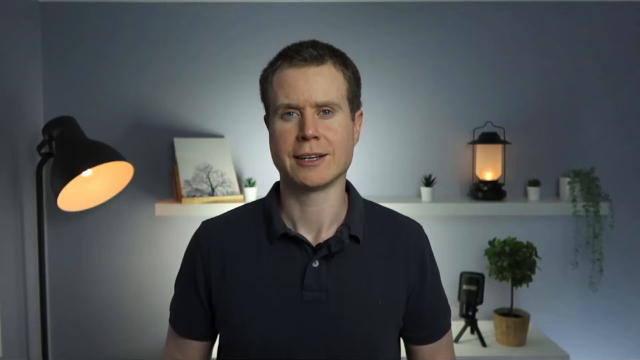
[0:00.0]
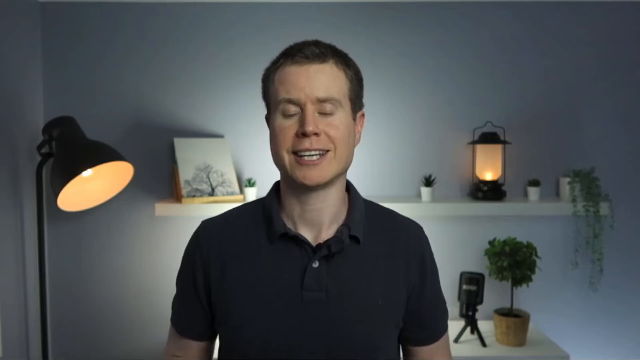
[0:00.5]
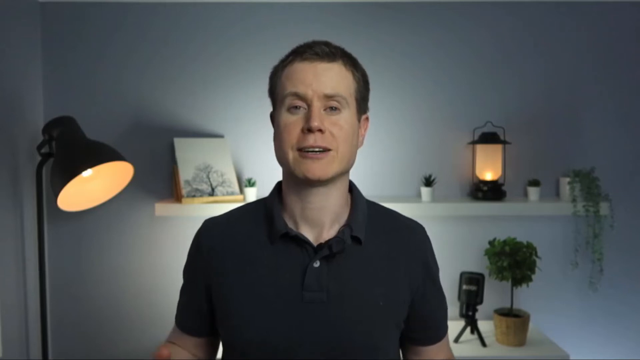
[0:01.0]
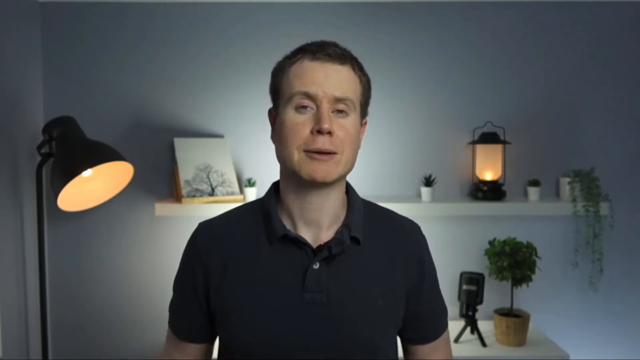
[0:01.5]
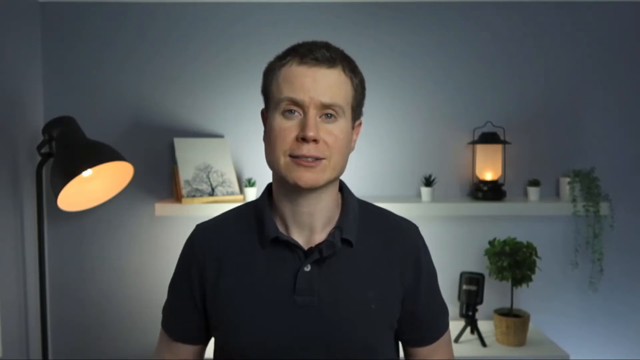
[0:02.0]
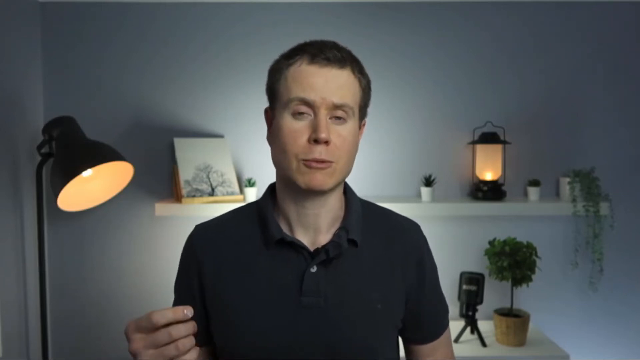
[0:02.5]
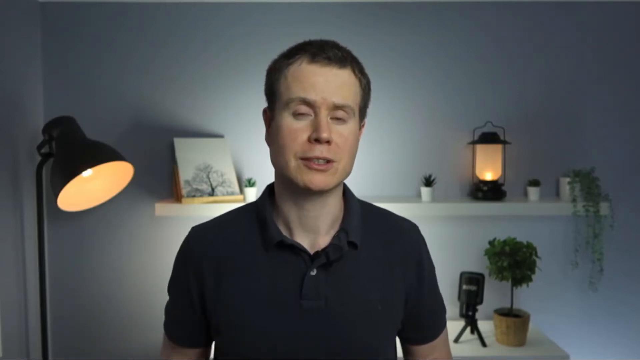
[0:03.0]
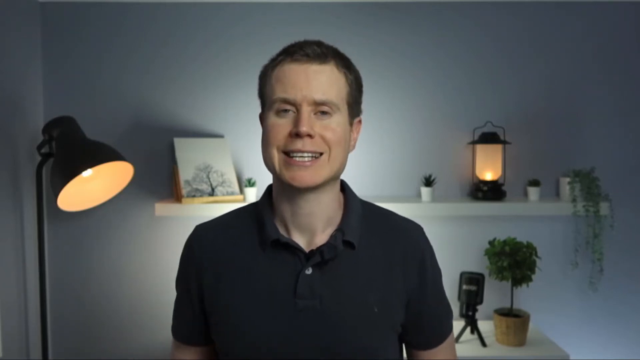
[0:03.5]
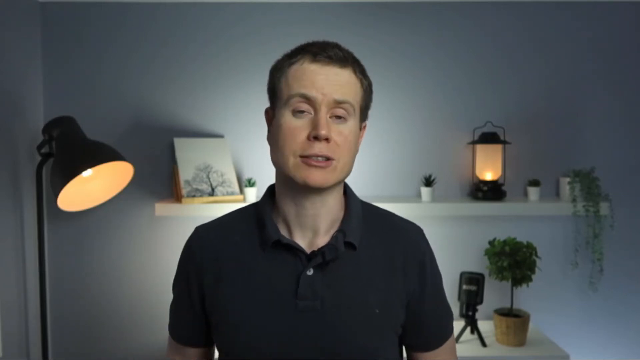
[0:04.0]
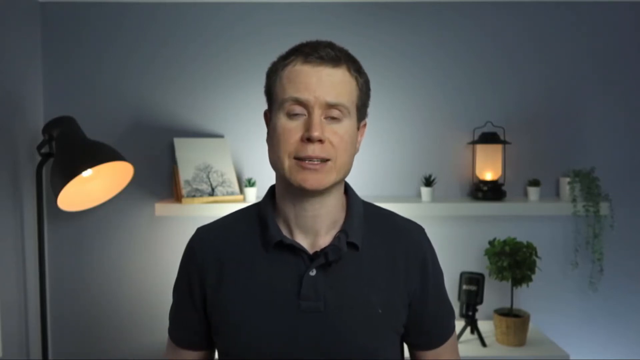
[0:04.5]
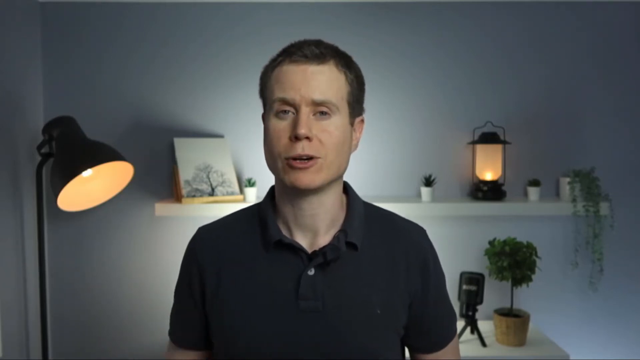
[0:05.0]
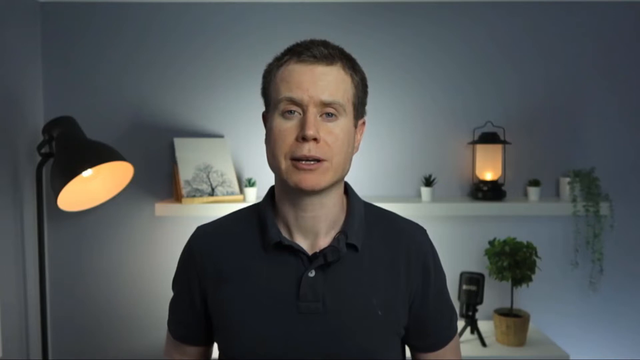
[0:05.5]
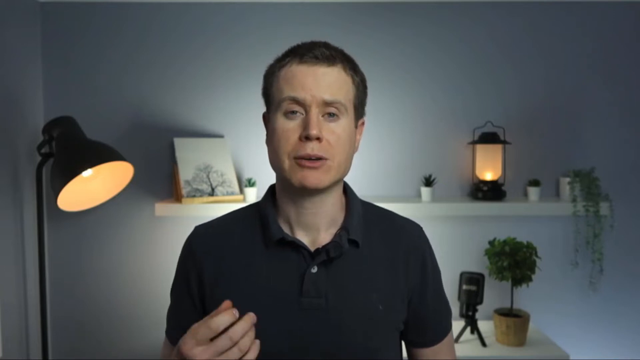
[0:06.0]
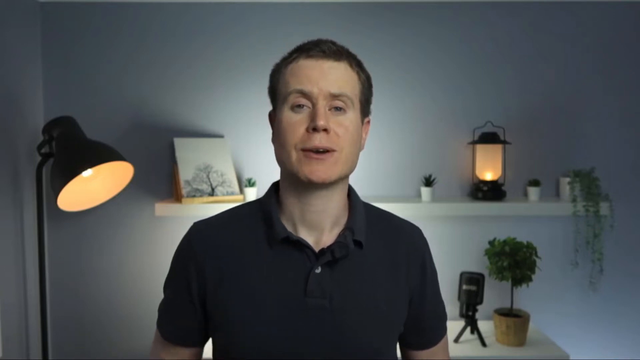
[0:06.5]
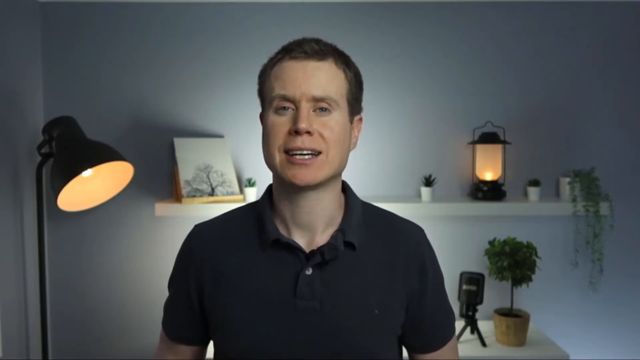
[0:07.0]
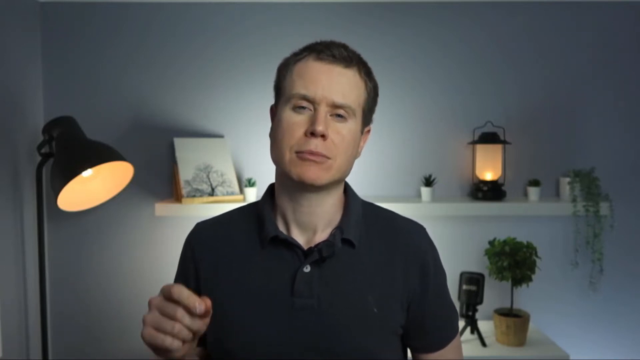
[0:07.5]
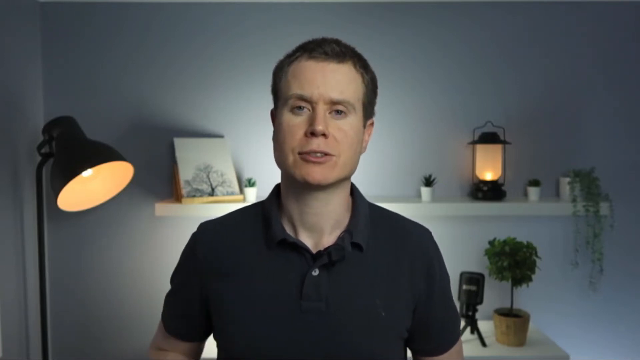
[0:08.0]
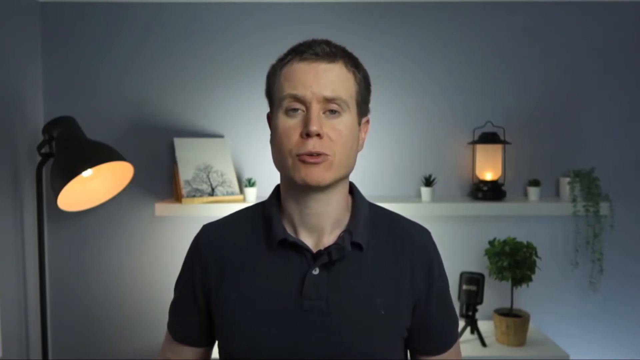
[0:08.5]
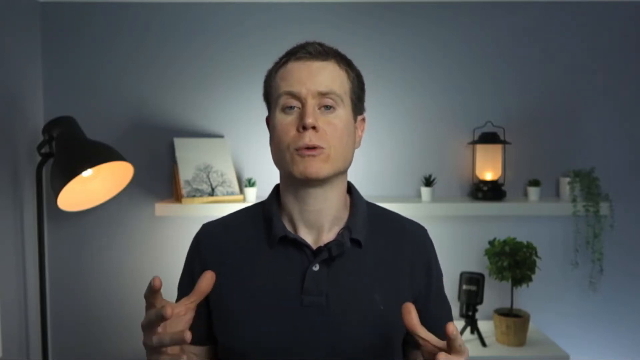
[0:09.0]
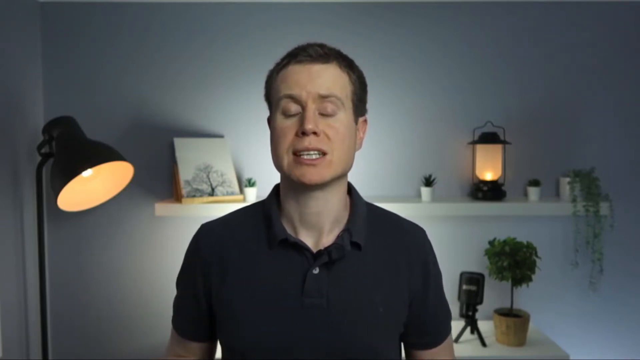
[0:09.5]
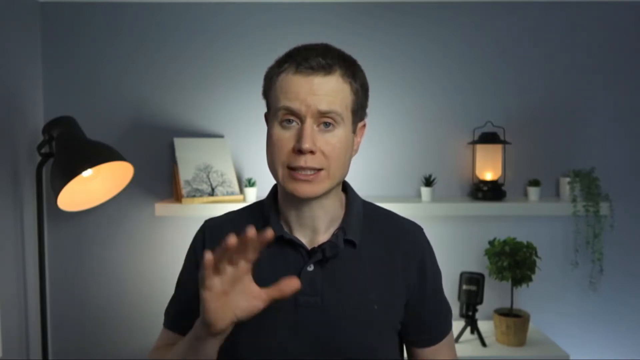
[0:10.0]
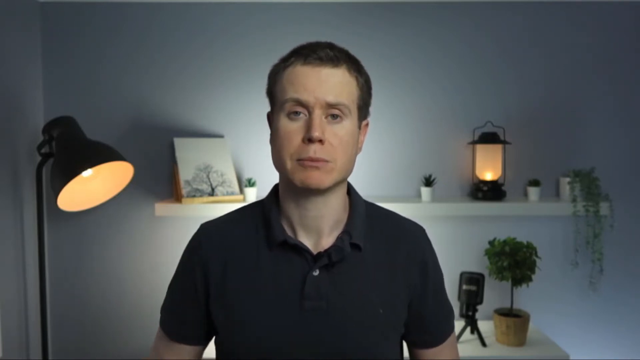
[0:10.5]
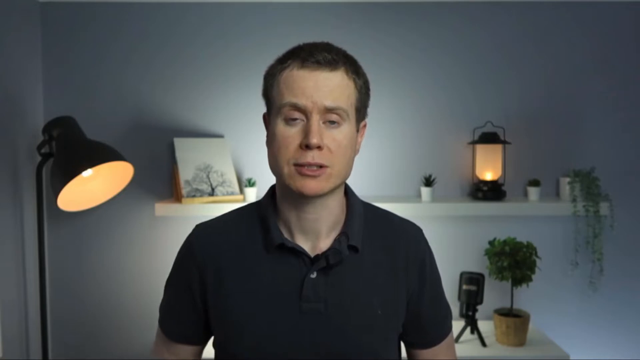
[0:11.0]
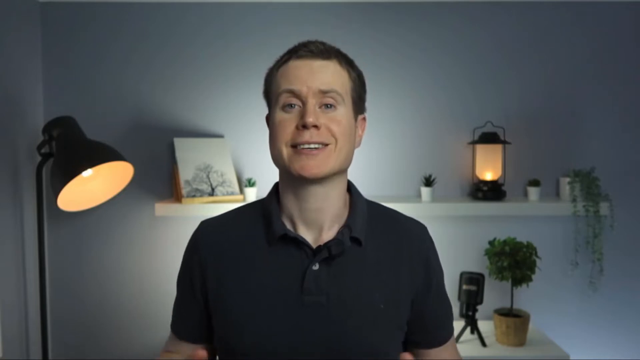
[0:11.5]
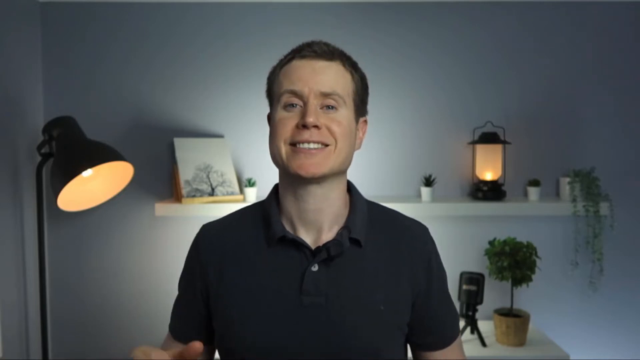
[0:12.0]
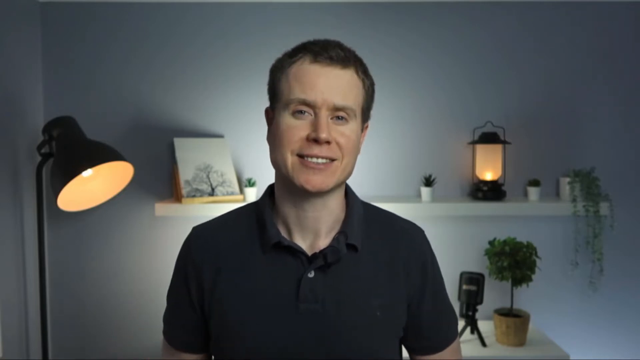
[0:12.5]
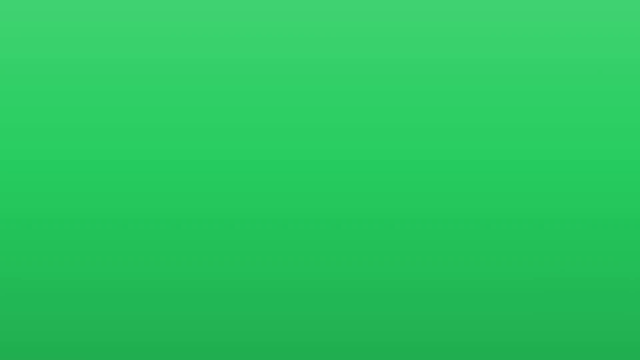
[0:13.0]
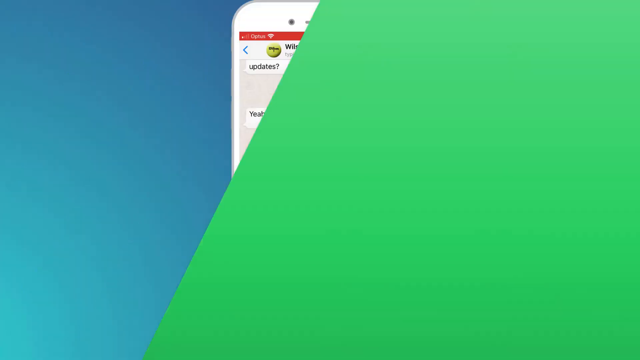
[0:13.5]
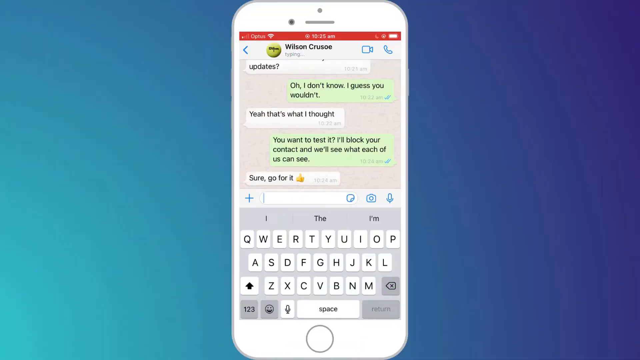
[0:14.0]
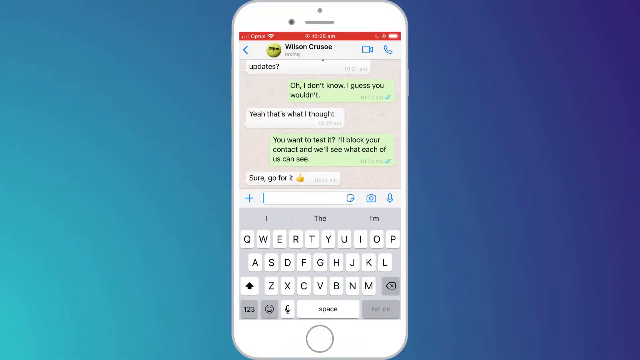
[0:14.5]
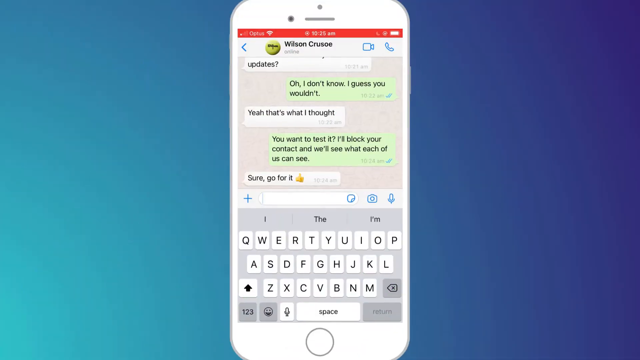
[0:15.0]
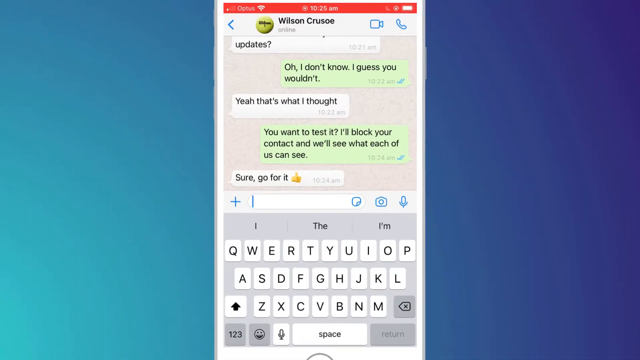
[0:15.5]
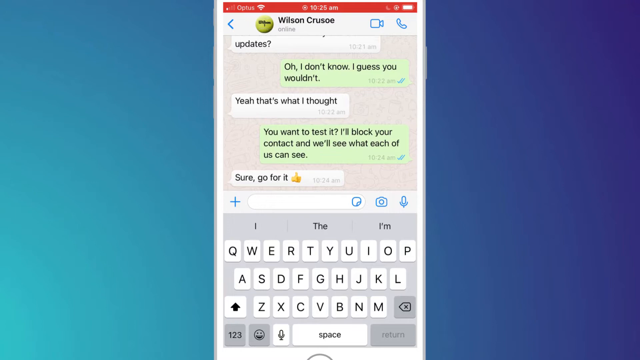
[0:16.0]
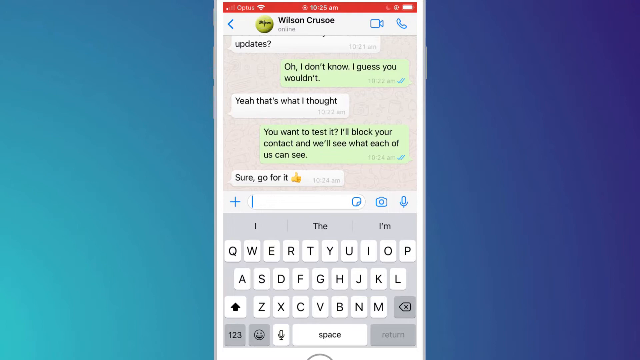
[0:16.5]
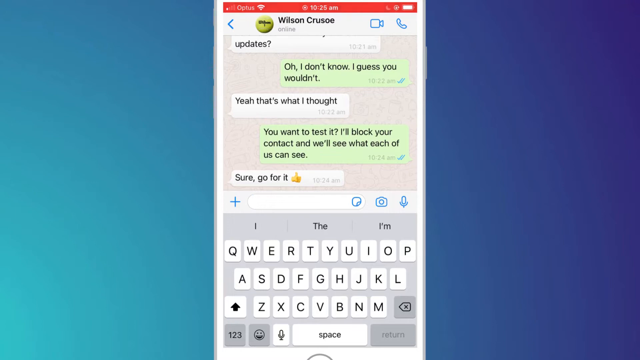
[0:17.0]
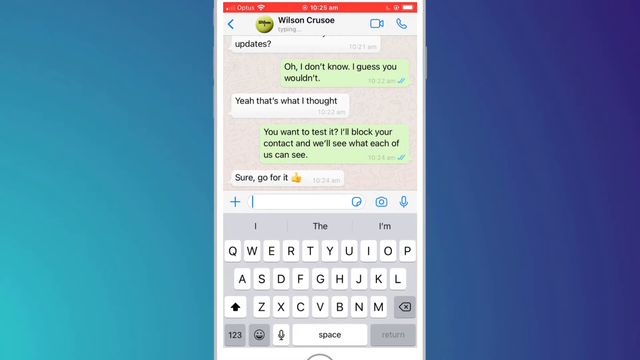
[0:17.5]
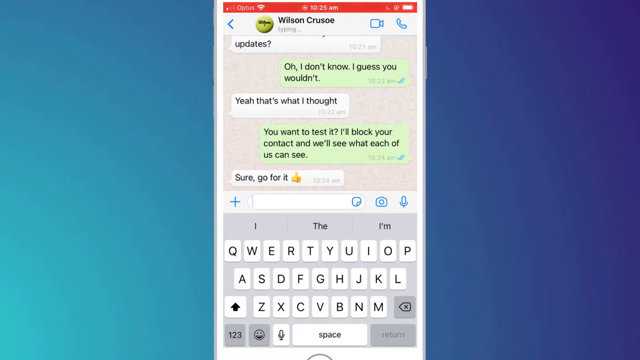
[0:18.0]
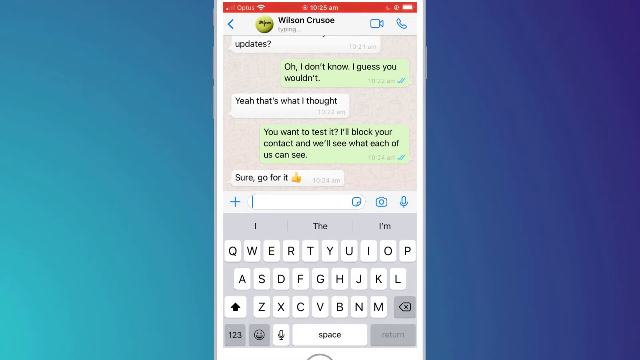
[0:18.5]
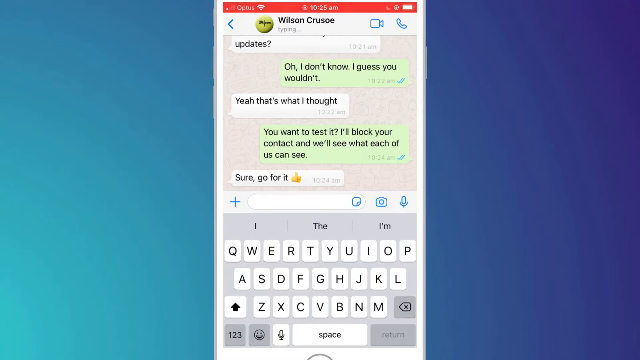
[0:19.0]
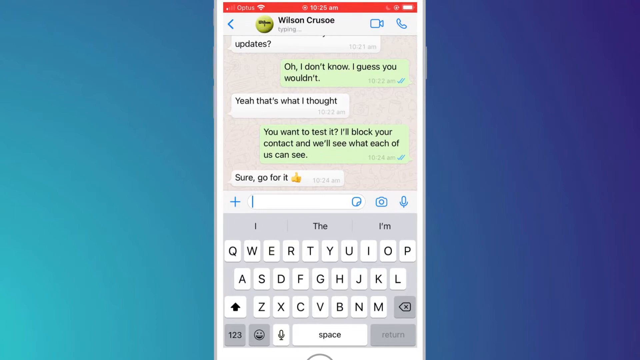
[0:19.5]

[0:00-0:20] A white man faces the camera, wearing a short-sleeved black shirt with one button on the collar. On the left side of the screen there is a lamp pointing down. Behind him is a white wall with a shelf on it. The shelf holds three plants in small pots, a plant on the right that sort of hangs down in a square pot, and a lantern, with leaves on the left side of the shelf. He talks, raising his right hand so his right fingertips show at the bottom of the screen. He smiles a little, blinks, and nods his head left and right, raising mostly his right hand every now and then. He raises his left hand, and the video changes to a blue background with an illustration of a phone screen. At the top it says "Wilson Crusoe", and below that is a text conversation. On the left it says "updates"; in green on the right it says "oh, I don't know. I guess you wouldn't." Then come "Yeah, that's what I thought", "you want to test it. I'll block your contact, and we'll see what each of us can see" and "Sure, go for it." The keyboard is up, and the view zooms in.